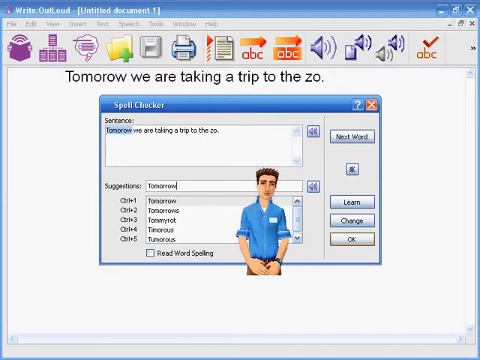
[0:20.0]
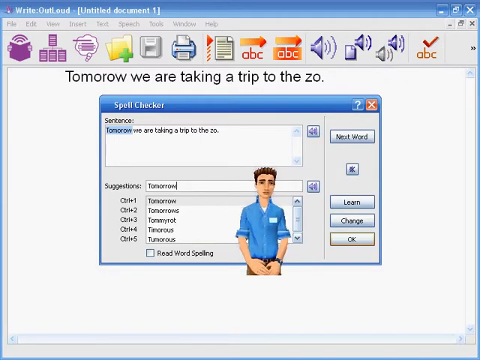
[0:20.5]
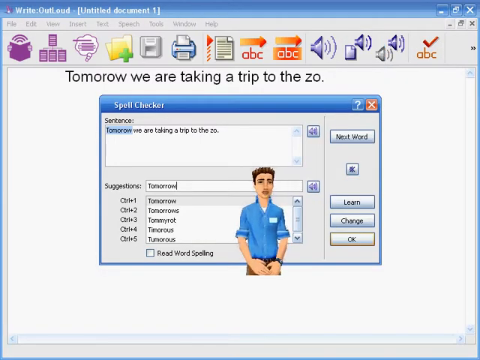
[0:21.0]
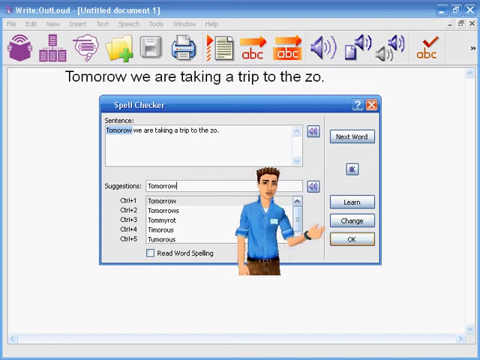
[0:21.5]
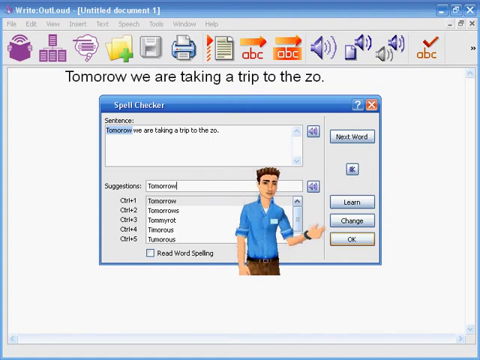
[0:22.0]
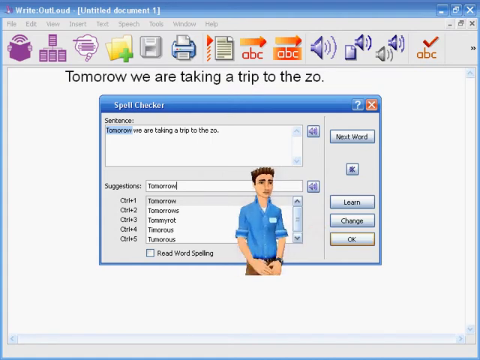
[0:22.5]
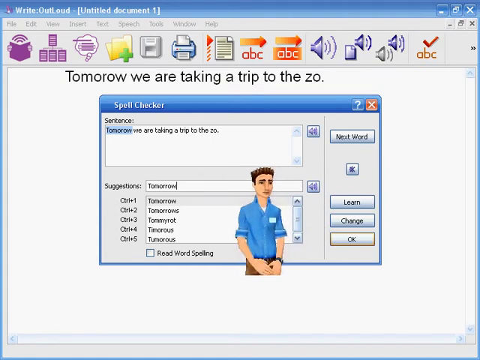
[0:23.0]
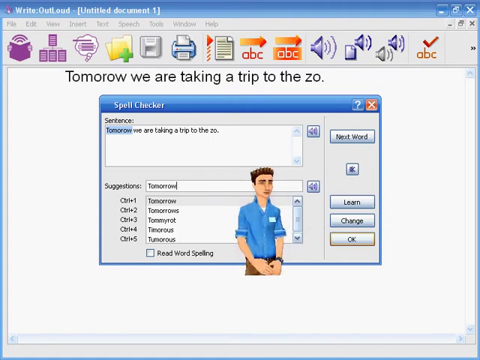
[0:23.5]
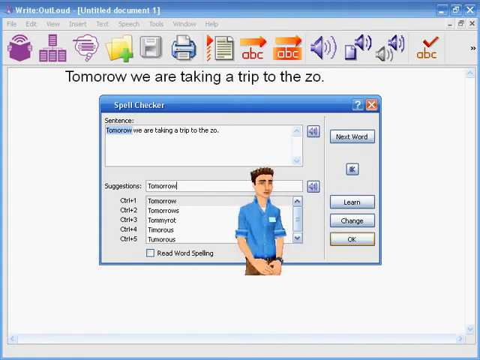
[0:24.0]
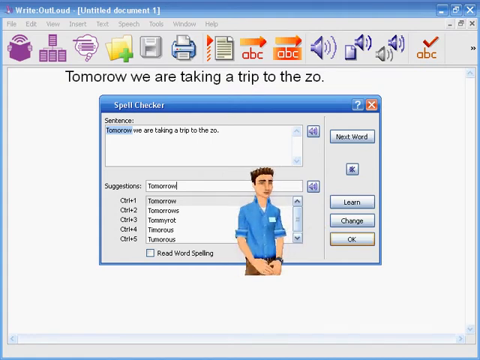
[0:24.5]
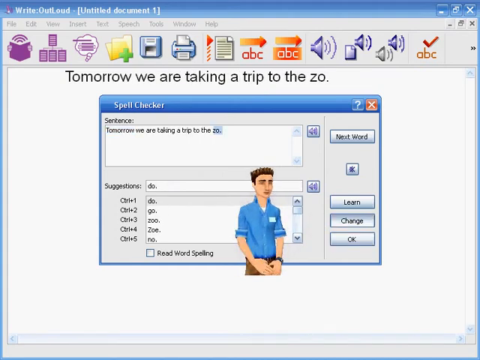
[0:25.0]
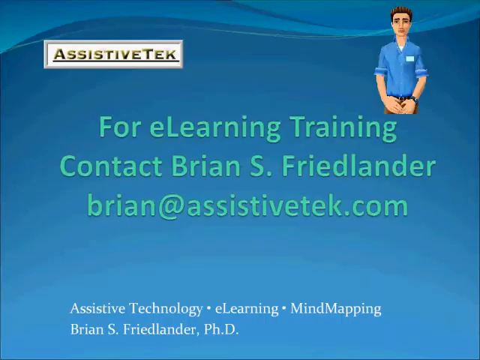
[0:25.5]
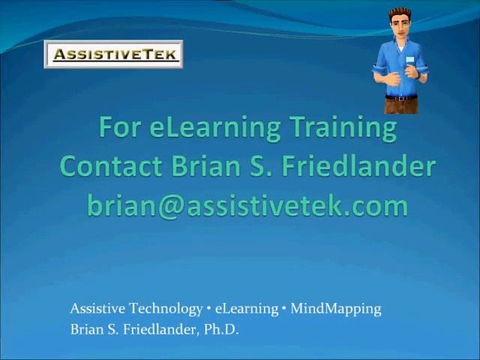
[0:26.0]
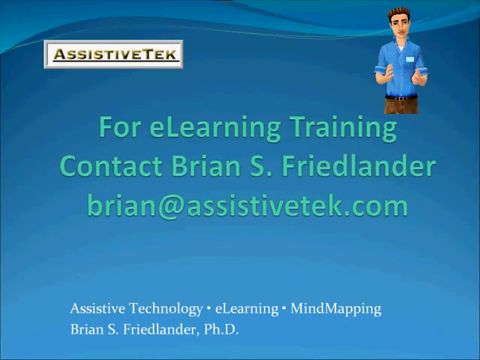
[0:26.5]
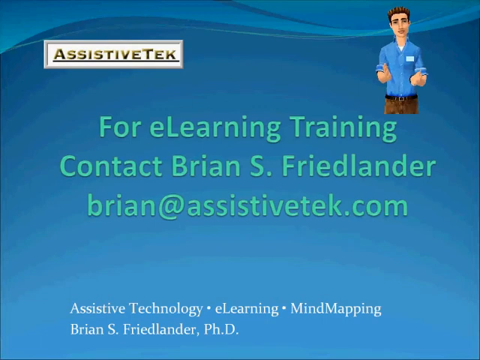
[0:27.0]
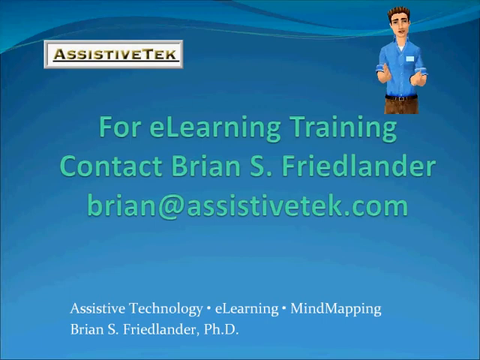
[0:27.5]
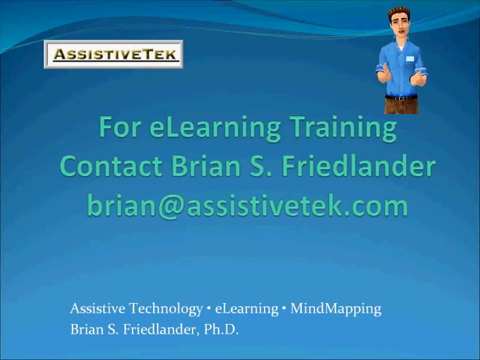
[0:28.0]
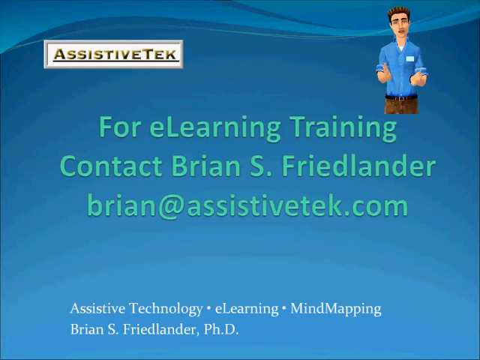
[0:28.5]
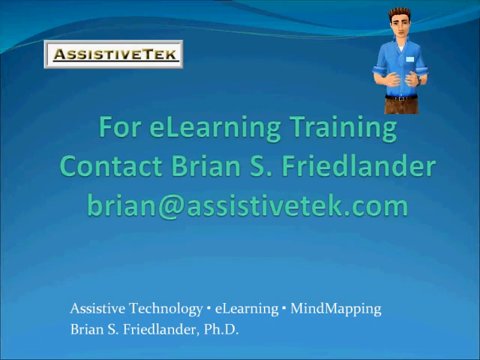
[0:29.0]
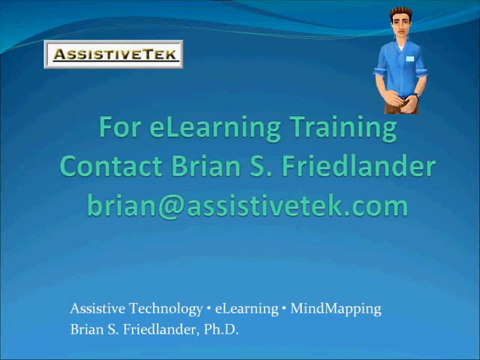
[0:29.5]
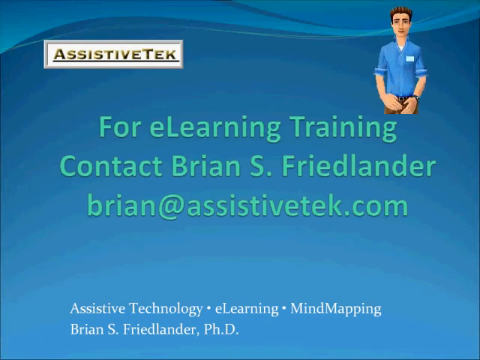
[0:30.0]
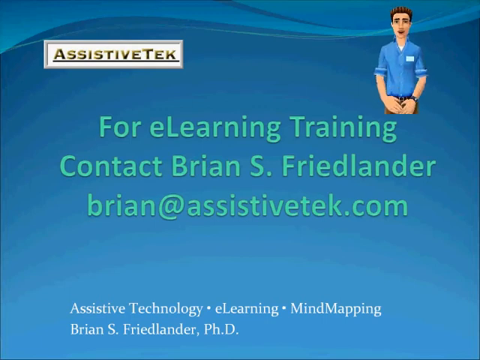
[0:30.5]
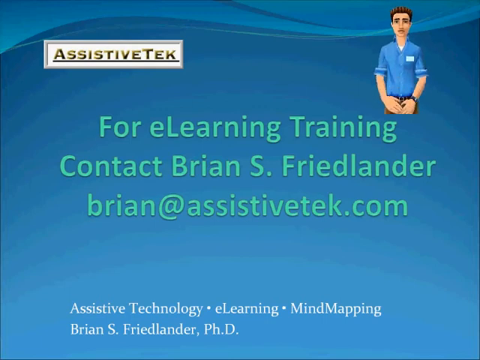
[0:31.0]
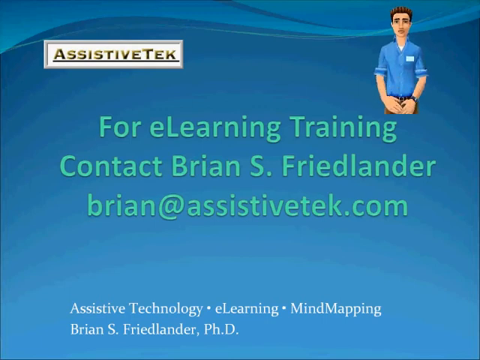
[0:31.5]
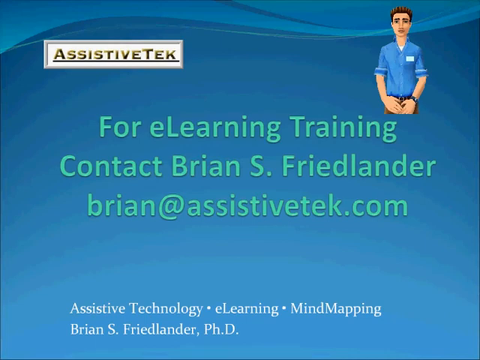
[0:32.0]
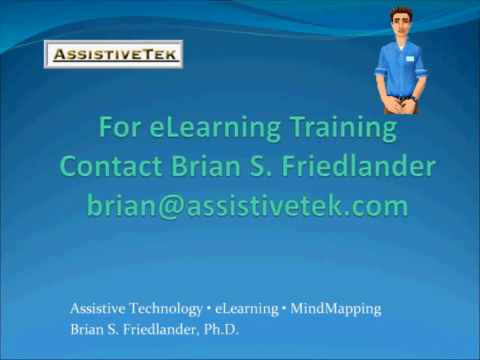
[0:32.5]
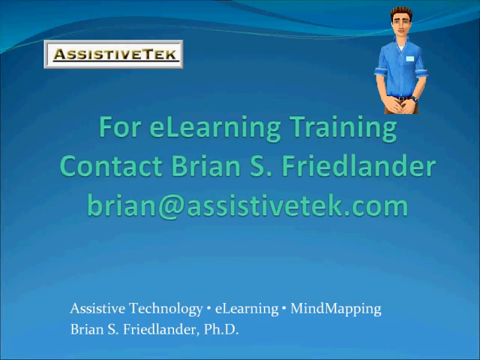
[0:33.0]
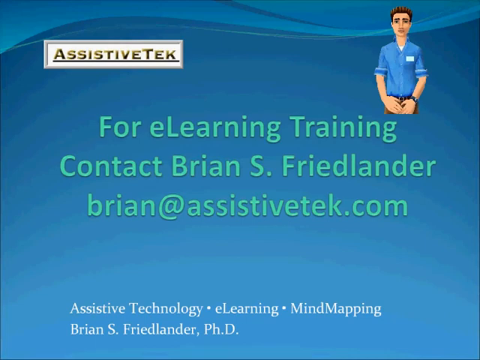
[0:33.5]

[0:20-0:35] A new tab called "Spell Checker" appears in the center, showing the entire sentence. The word "tomorrow" is highlighted; it is missing its second R. Below the highlighted sentence is a suggestion box with the correct spelling of "tomorrow" filled in, and below that are other word options selectable with key combinations: Control plus 1 for "tomorrow", Control plus 2 for "tomorrows", Control plus 3 for "Tommy Rot", Control plus 4 for "timorous", and Control plus 5 for "tumorous". The avatar speaks and sort of puts his hands together. Next, the second misspelled word, "zo" for "zoo", is highlighted. The suggestion is "do", while among the Control options the correct "zoo" is Control plus 3, and options 1, 2, 4 and 5 are "do", "go", "Zoe" and "no". The view then switches back to the AssistiveTech start screen, where the center text now reads "for e-learning training, contact Brian S. Freitlander, brian at assistivetech.com". The avatar moves, sort of pointing the fingers of its right hand at the viewer while its other hand looks more like a fist, then puts its hands back down over its crotch area as it finishes talking.